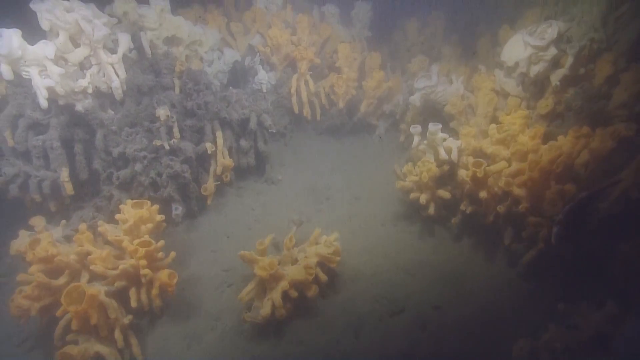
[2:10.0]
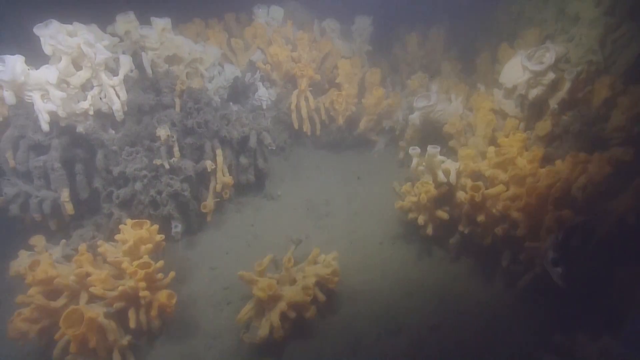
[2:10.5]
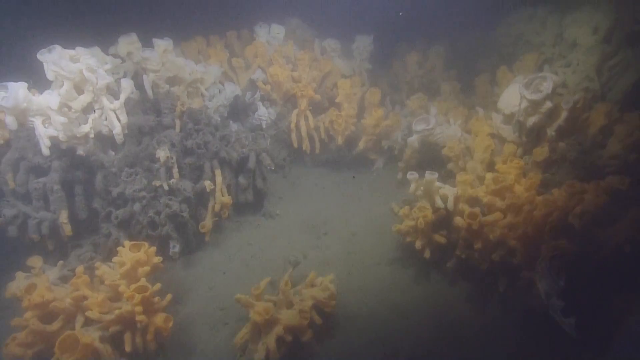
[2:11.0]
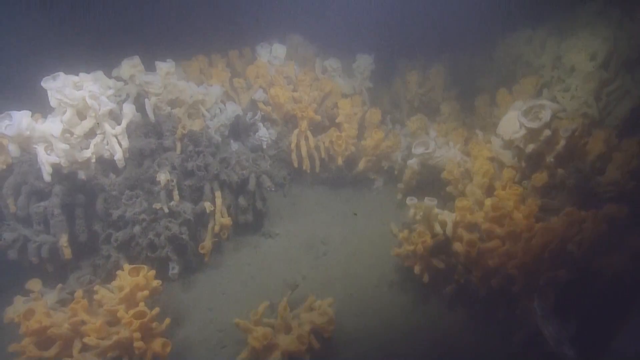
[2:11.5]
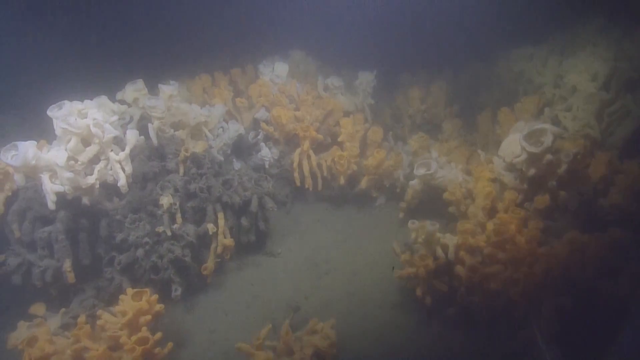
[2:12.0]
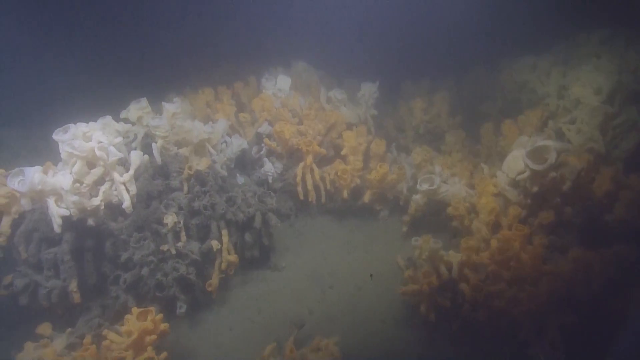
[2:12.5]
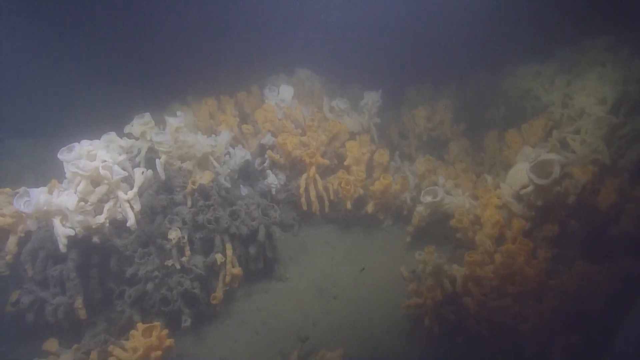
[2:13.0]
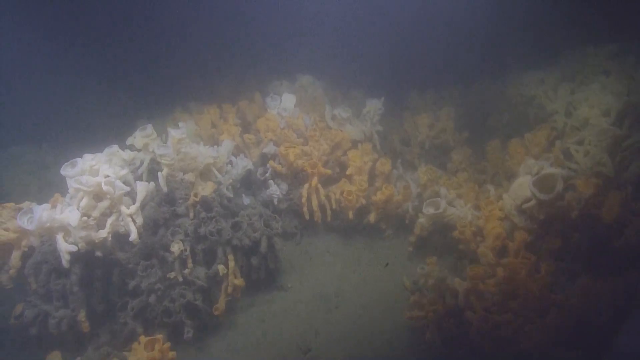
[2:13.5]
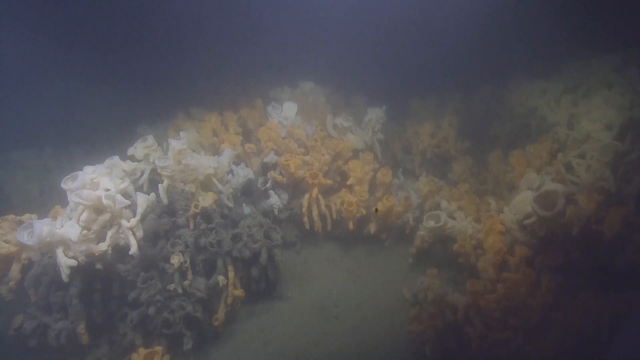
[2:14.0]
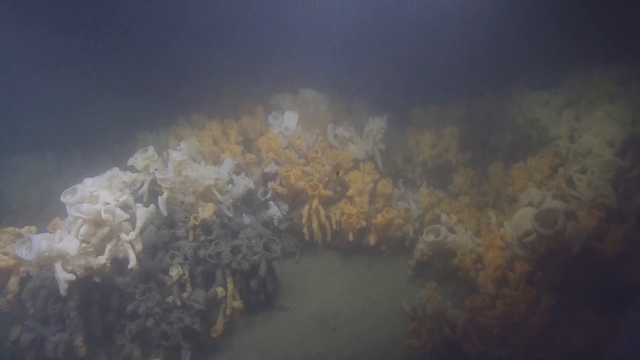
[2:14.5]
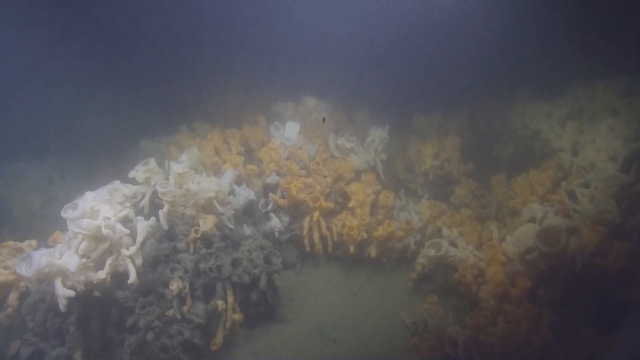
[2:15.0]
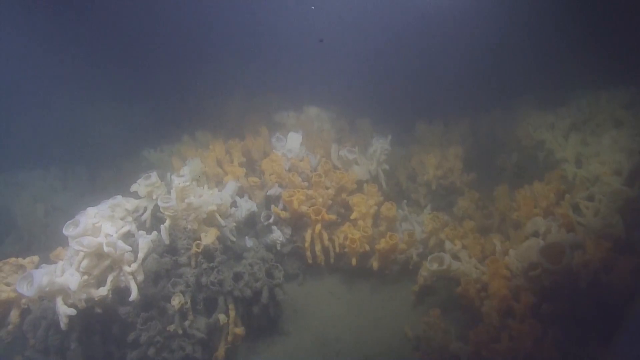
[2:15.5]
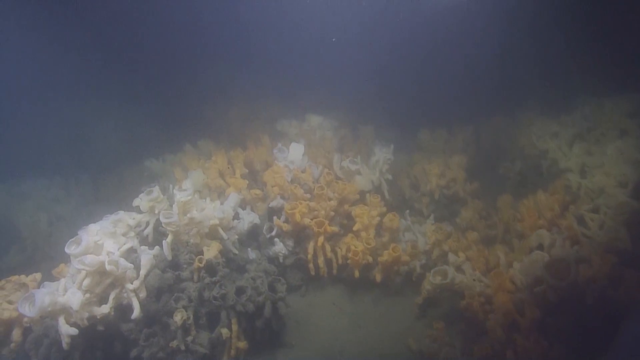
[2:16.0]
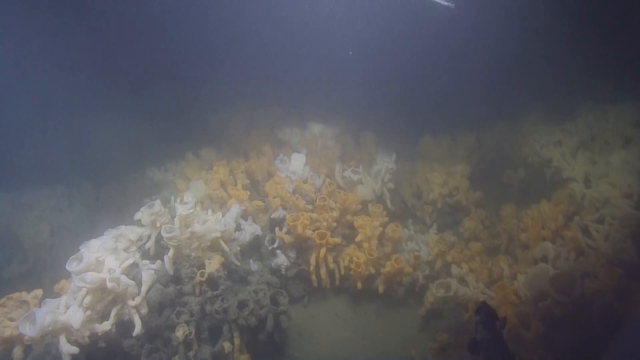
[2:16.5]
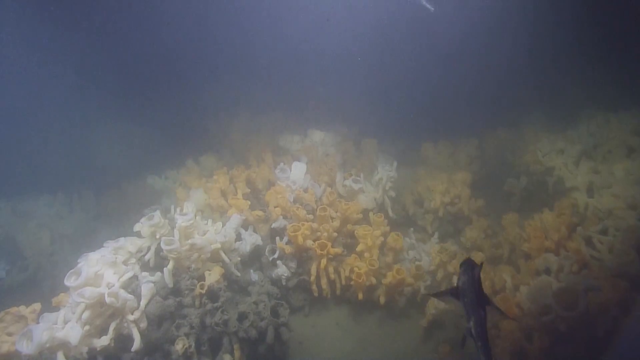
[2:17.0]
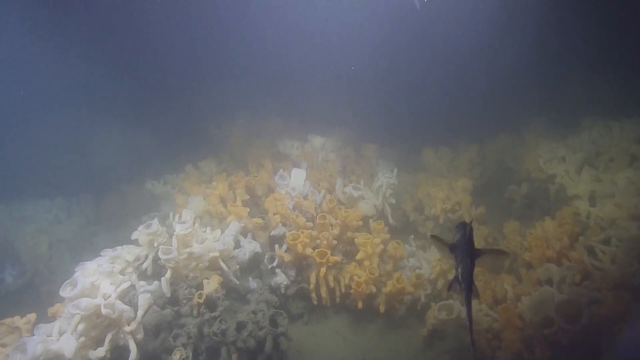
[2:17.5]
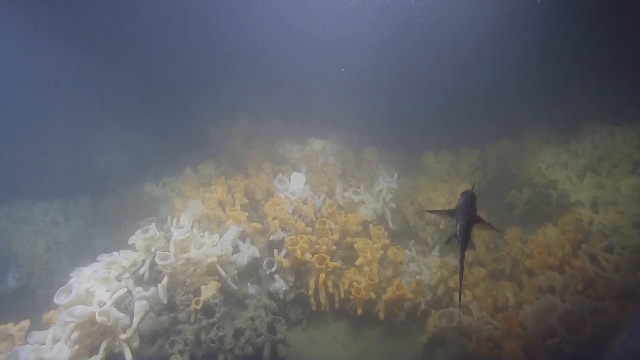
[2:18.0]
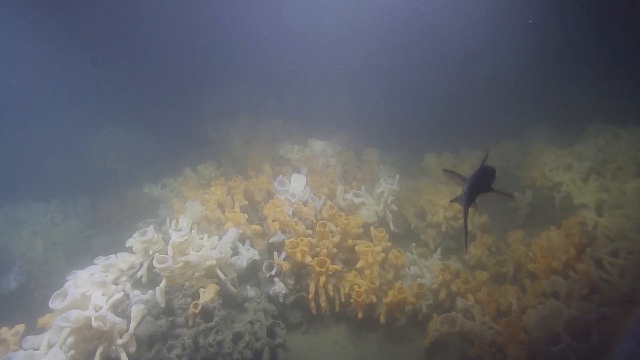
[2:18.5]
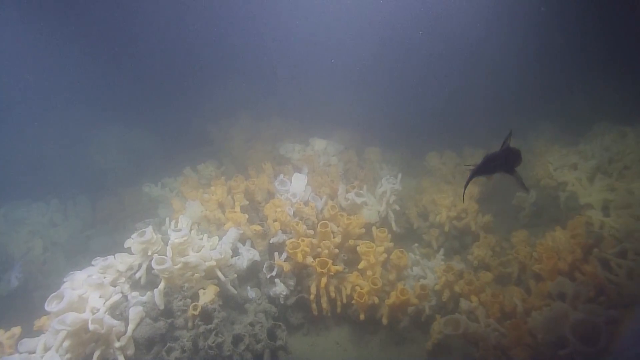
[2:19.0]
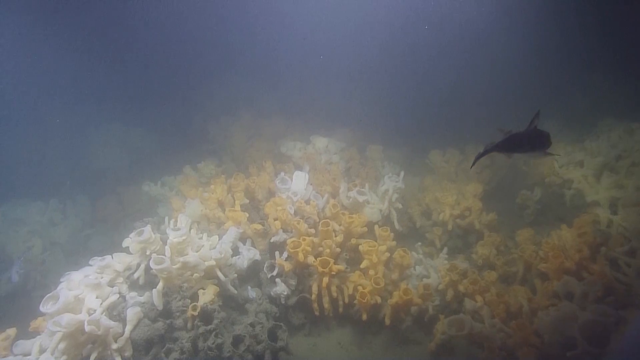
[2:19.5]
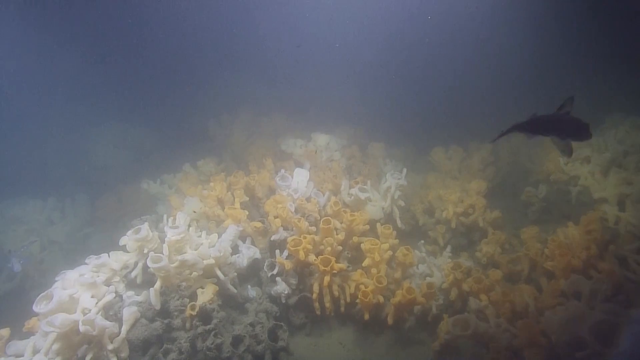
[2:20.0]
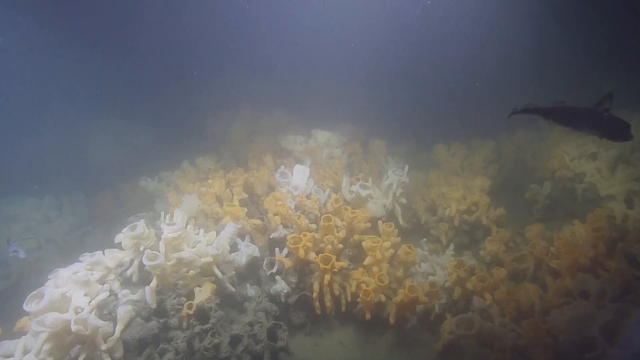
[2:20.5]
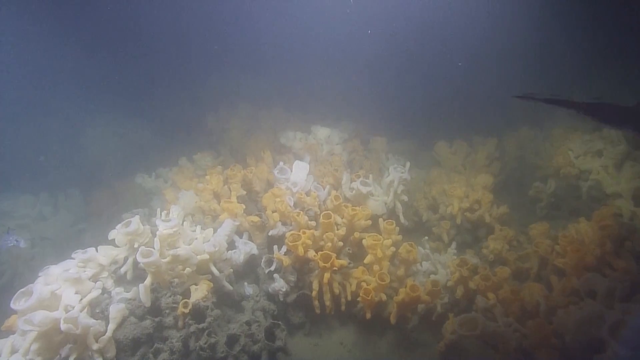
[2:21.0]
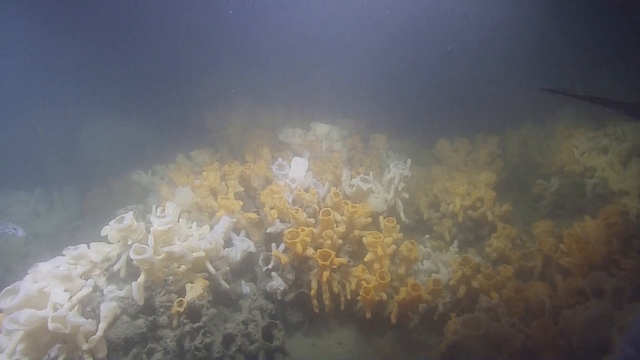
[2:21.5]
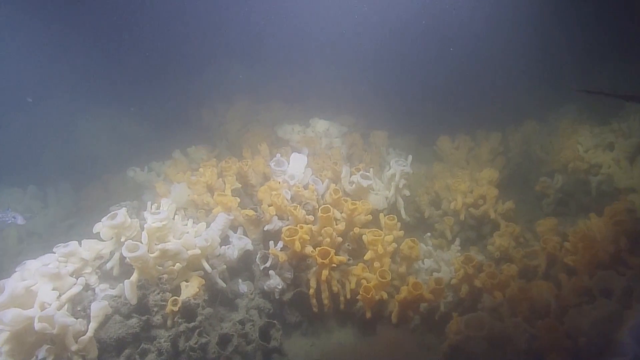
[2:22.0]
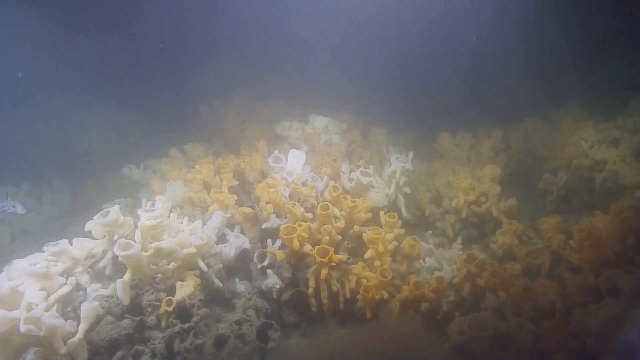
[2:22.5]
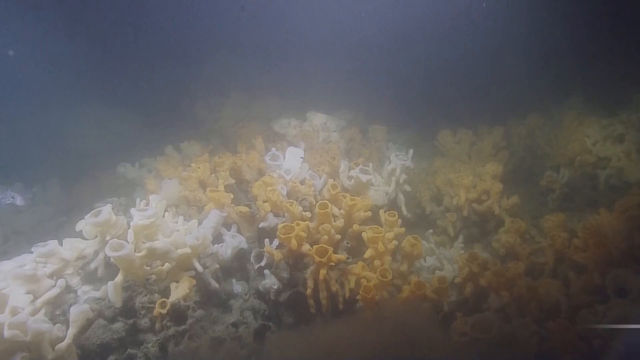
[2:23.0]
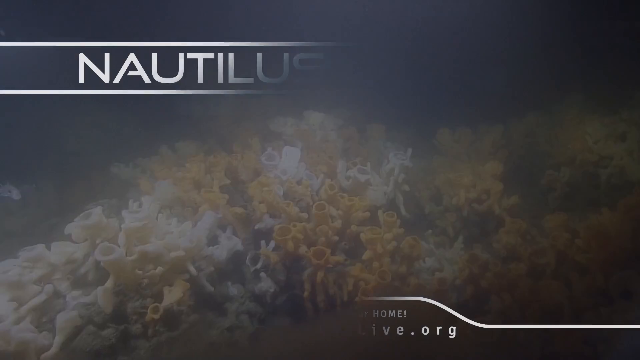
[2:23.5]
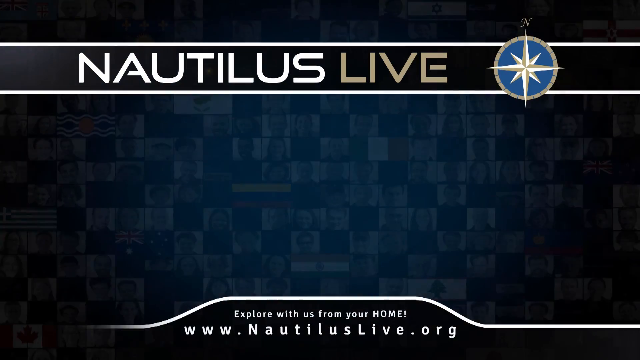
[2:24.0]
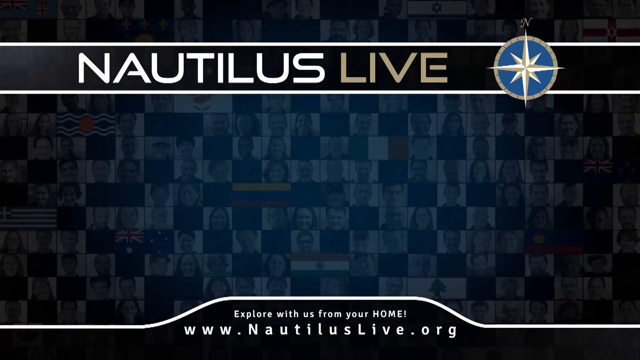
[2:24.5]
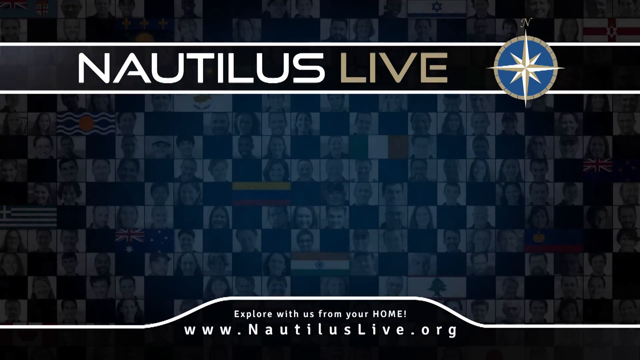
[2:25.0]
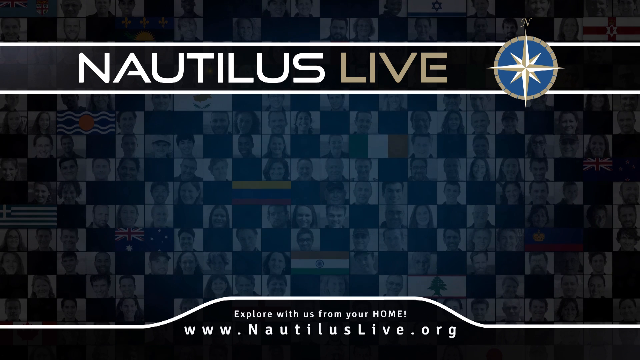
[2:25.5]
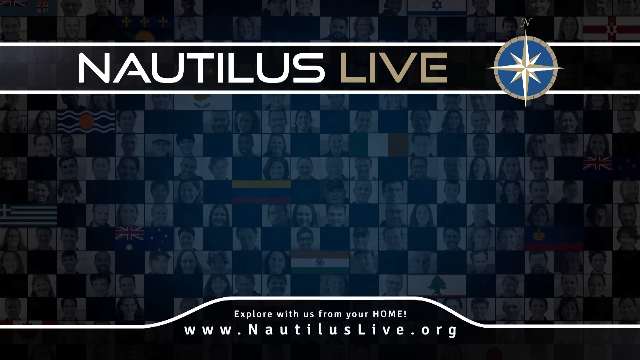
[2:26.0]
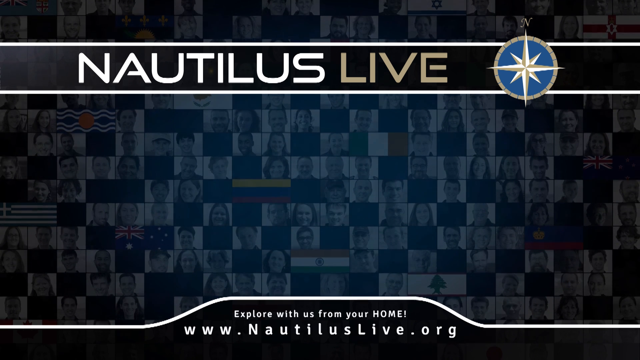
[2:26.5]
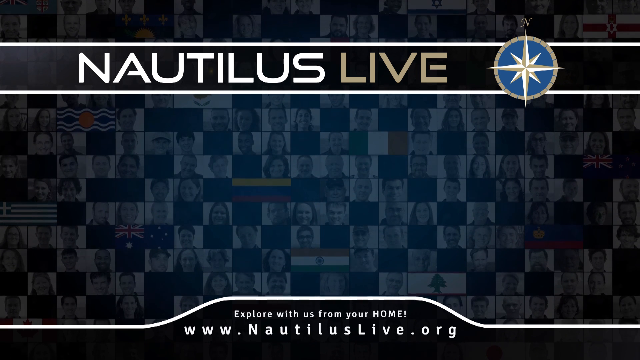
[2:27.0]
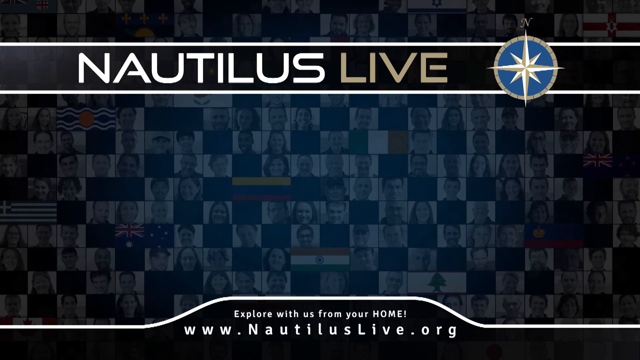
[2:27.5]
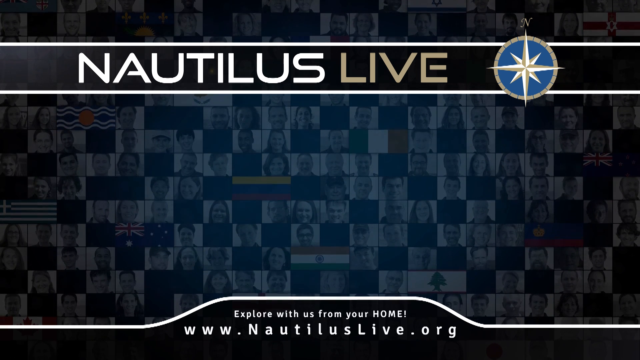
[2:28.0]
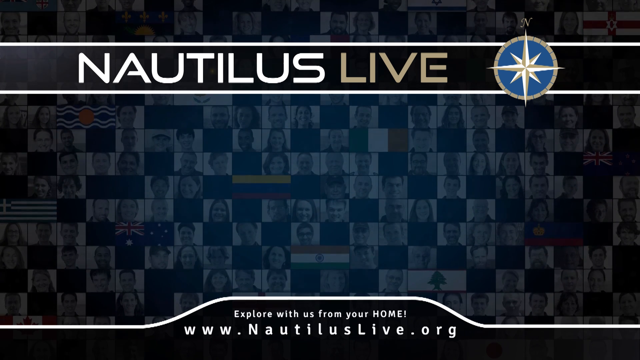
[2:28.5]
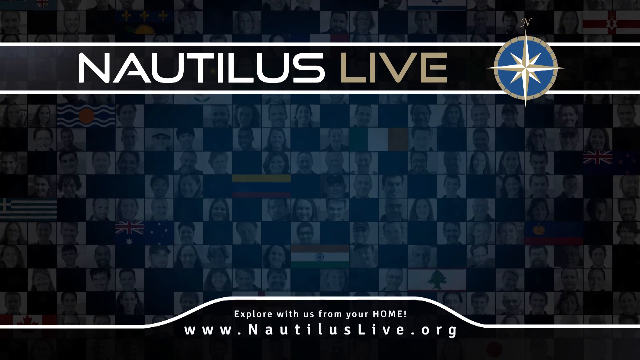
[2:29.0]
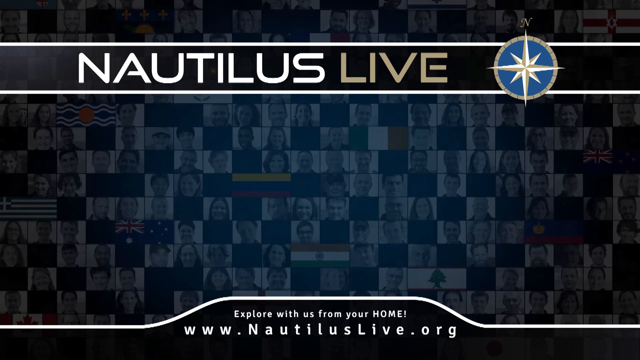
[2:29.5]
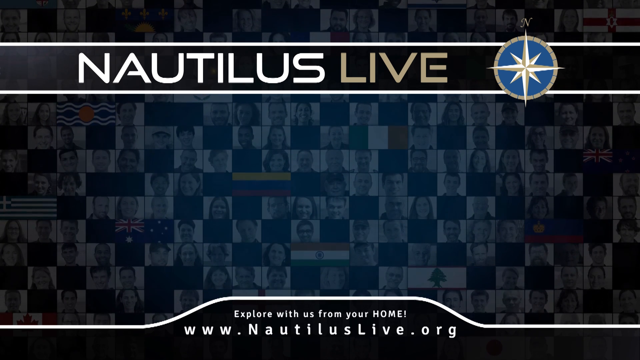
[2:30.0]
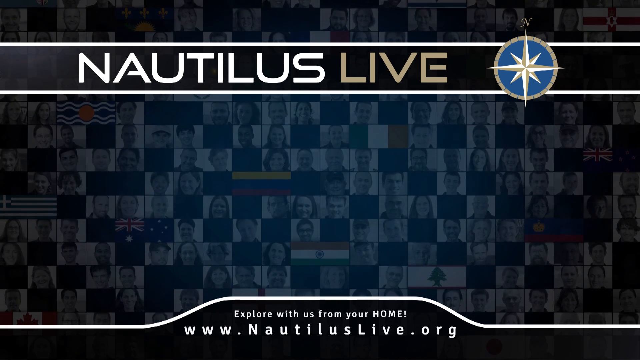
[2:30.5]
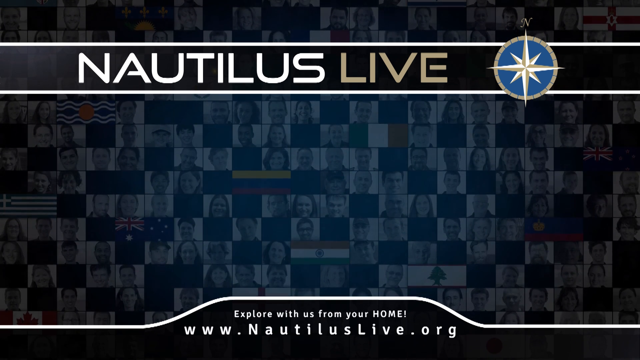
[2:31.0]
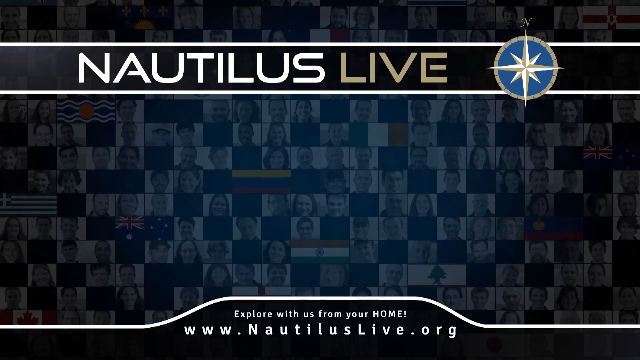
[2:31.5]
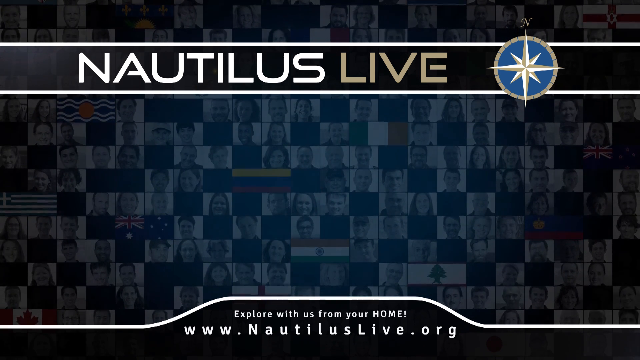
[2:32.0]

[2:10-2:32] Live footage shows the ocean floor with a coral reef. At the bottom left of the screen is a large piece of orange coral, and at the bottom center a smaller piece of orange coral, with gray sand dividing the coral. Across the top of the screen, a large coral reef covers the screen from left to right, with sand on the floor in the background. The shot pans upward from the bottom of the screen, revealing the dark blue vastness of the distant ocean as the reef drops lower on the screen and the submarine rises somewhat. A larger fish swims from the bottom of the screen up to the center and out of the shot to the right. As the submarine zooms in to the reef, little creatures can be seen swimming. Suddenly the shot changes to a still animation of the Nautilus Live logo: white text in a rectangle that covers the top of the screen, the rectangle lined with white. The Nautilus Live text is all white capital letters. To the right of the text is the Nautilus logo, a white star in a blue circle lined with white. The background looks like tiny boxes, each containing a picture of a person; it is somewhat grayed out and the pictures are not very clear.